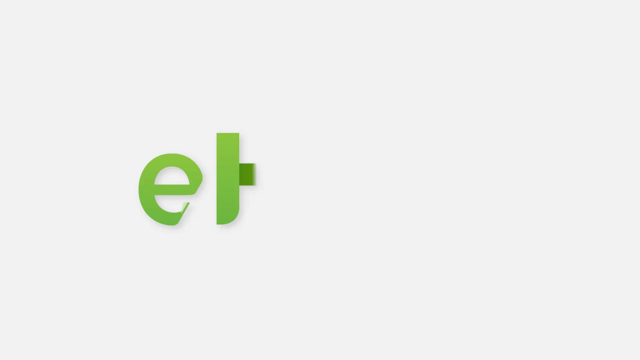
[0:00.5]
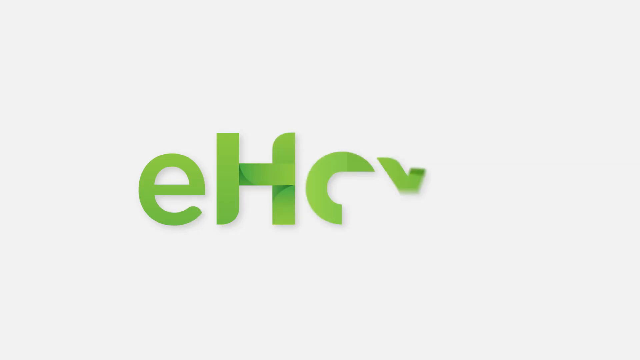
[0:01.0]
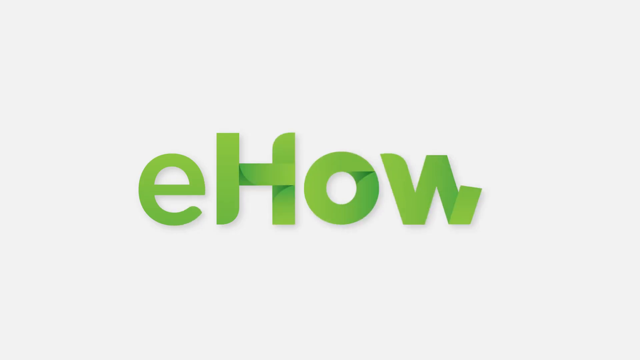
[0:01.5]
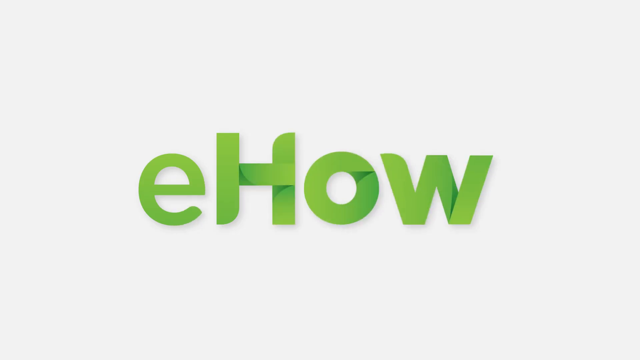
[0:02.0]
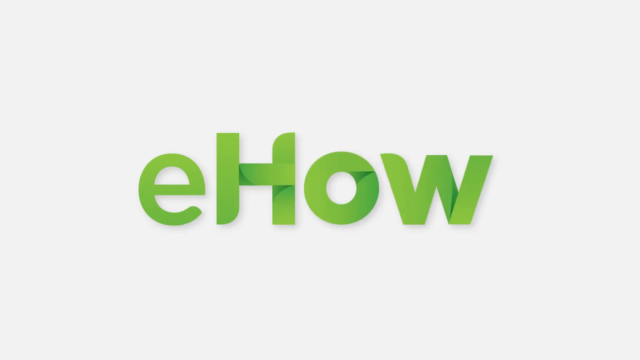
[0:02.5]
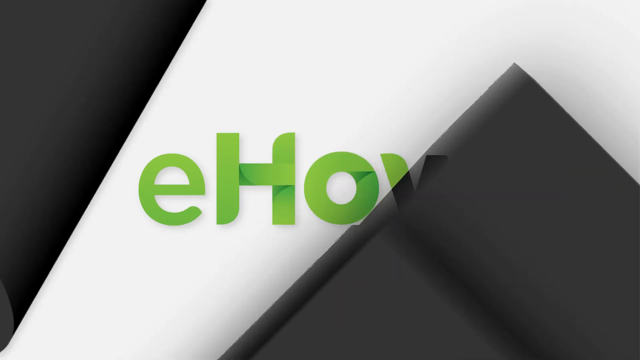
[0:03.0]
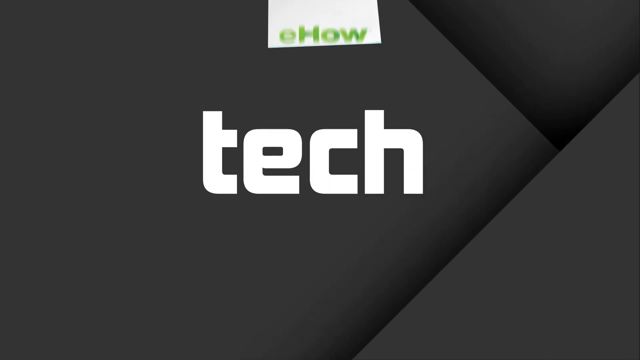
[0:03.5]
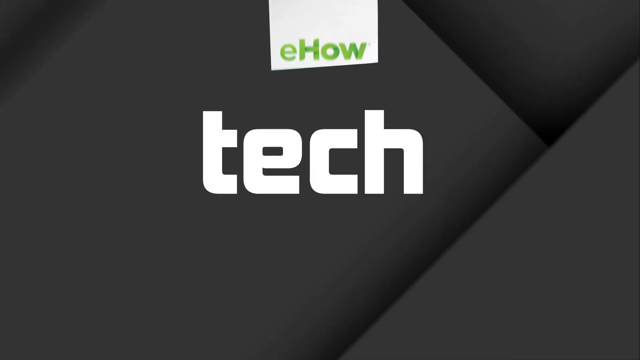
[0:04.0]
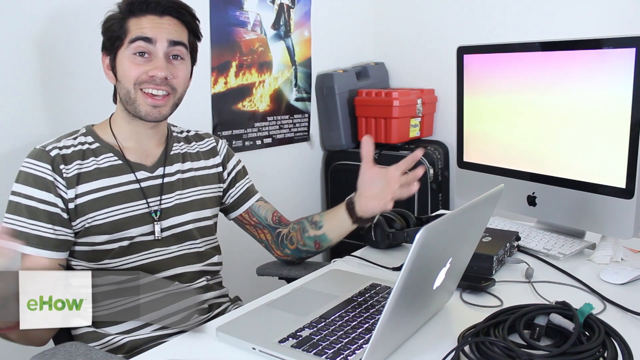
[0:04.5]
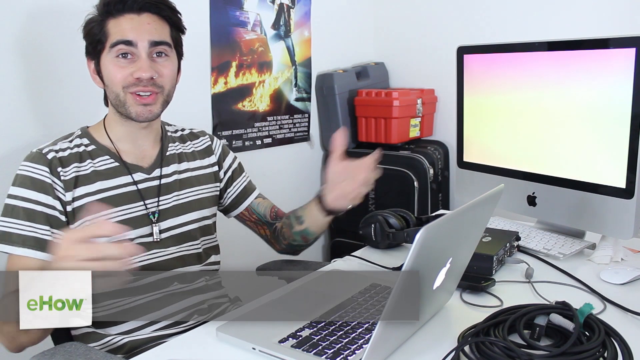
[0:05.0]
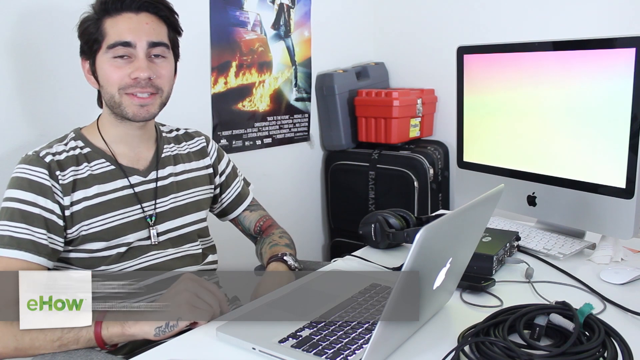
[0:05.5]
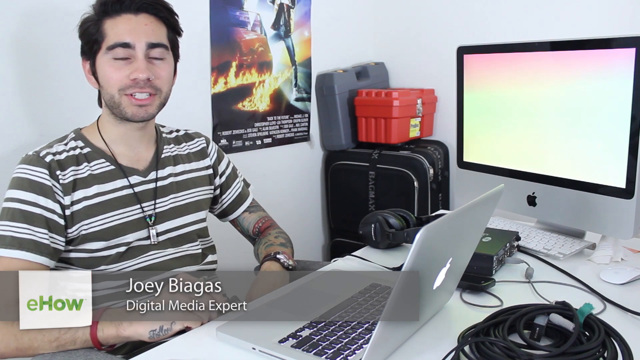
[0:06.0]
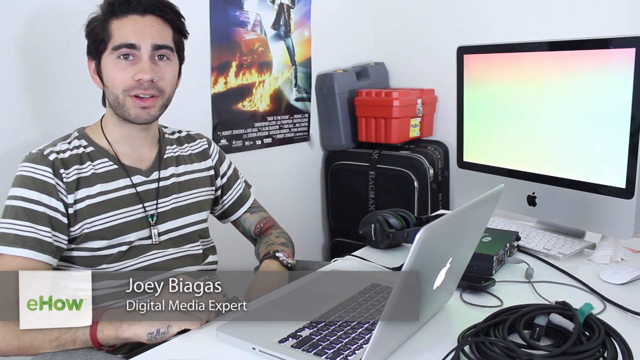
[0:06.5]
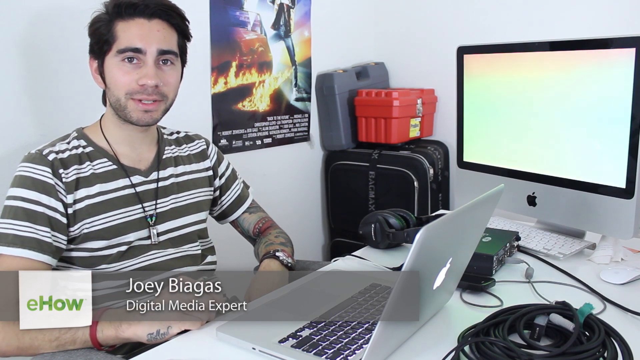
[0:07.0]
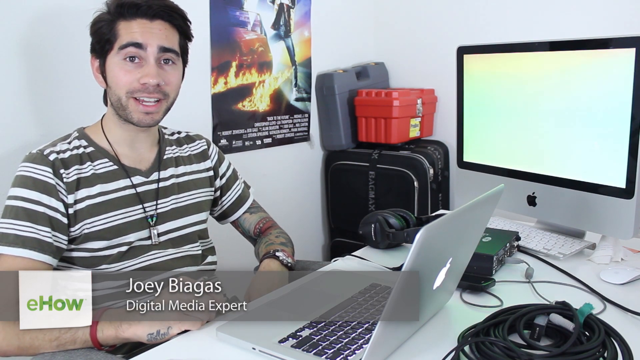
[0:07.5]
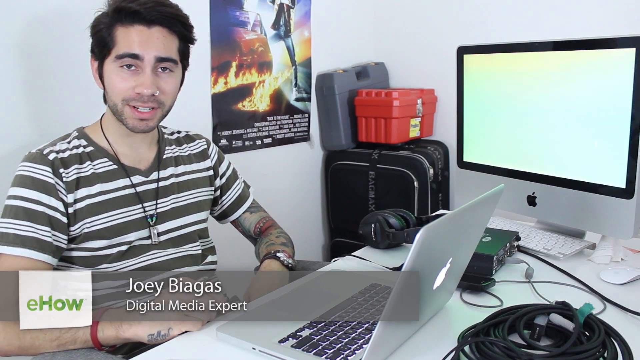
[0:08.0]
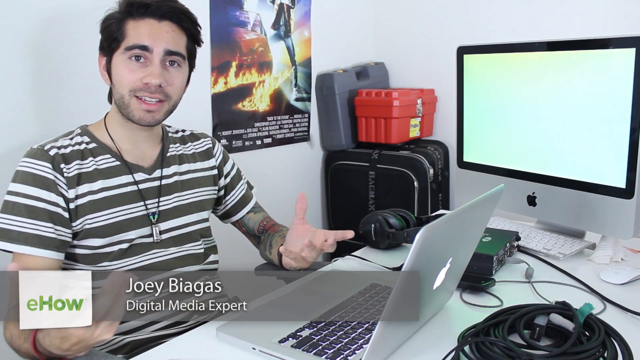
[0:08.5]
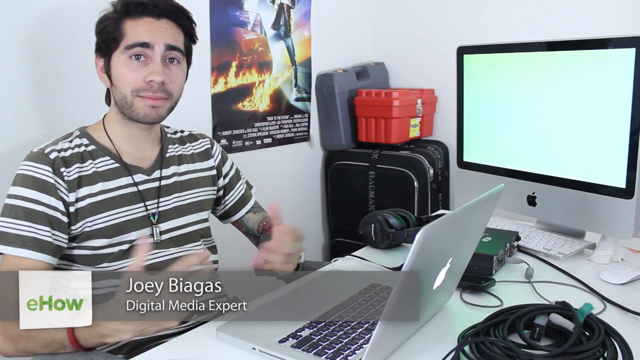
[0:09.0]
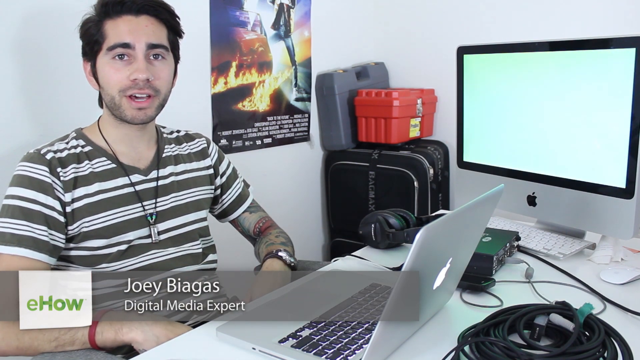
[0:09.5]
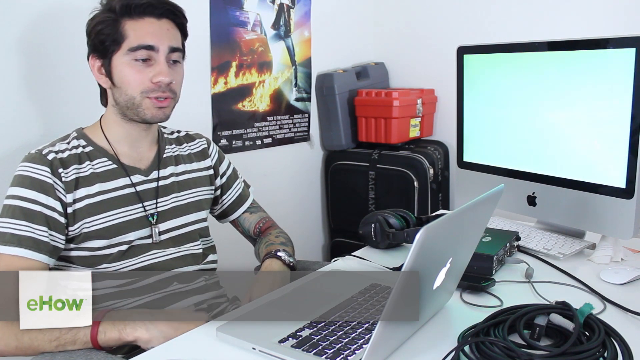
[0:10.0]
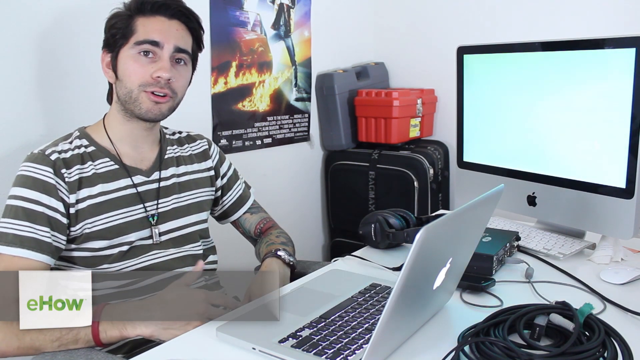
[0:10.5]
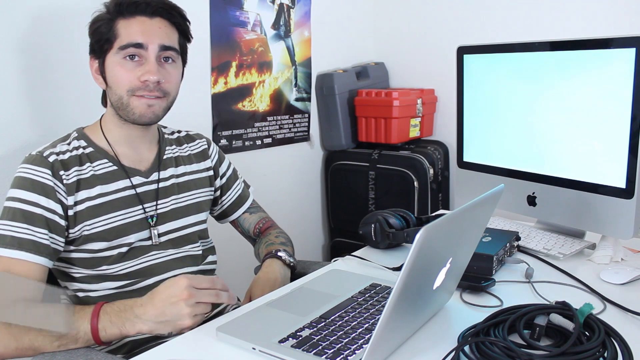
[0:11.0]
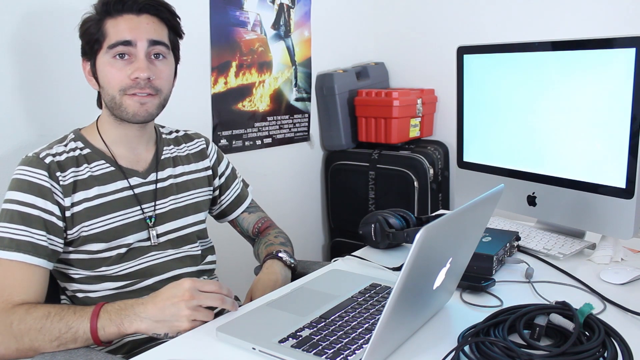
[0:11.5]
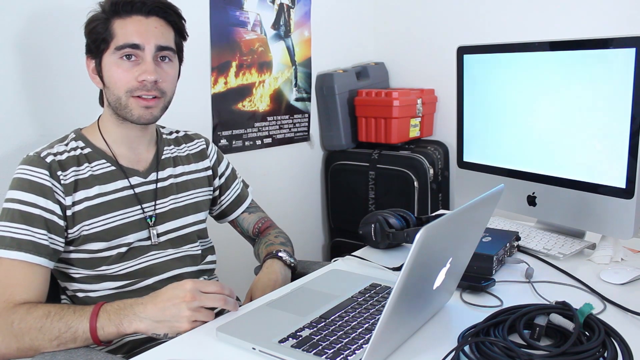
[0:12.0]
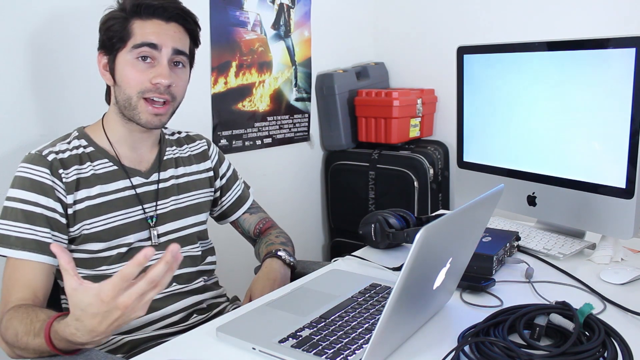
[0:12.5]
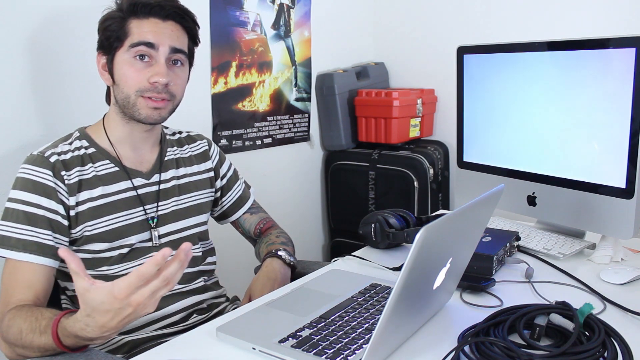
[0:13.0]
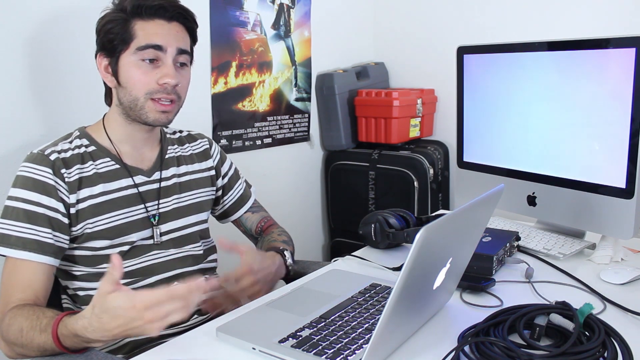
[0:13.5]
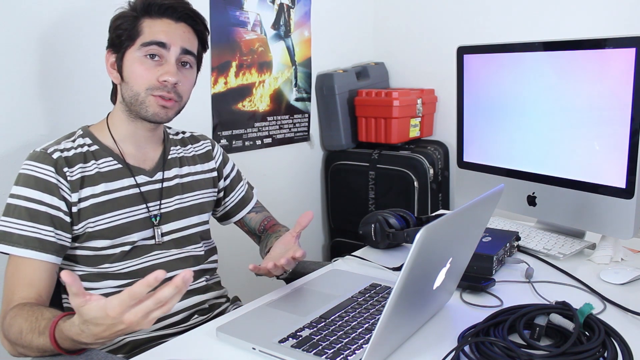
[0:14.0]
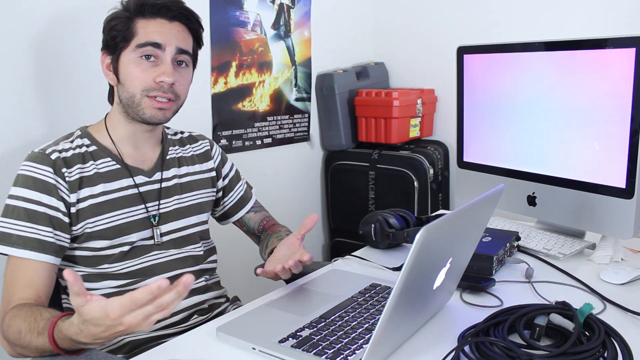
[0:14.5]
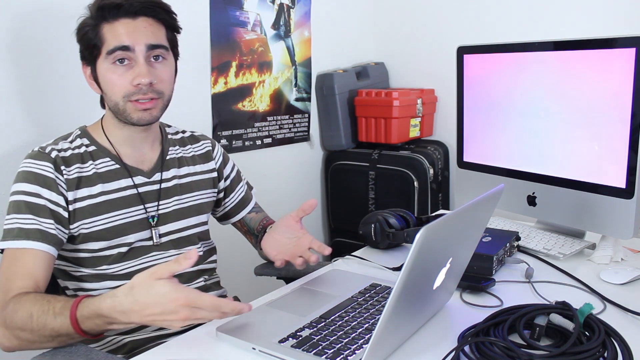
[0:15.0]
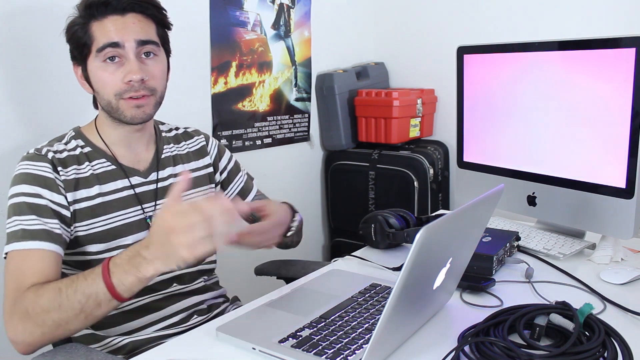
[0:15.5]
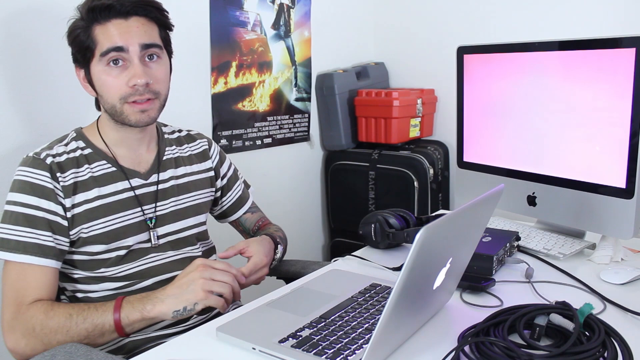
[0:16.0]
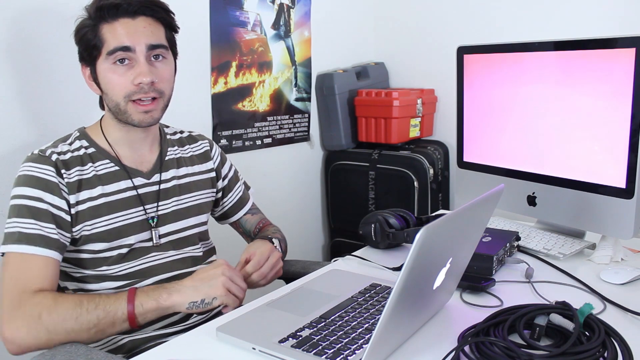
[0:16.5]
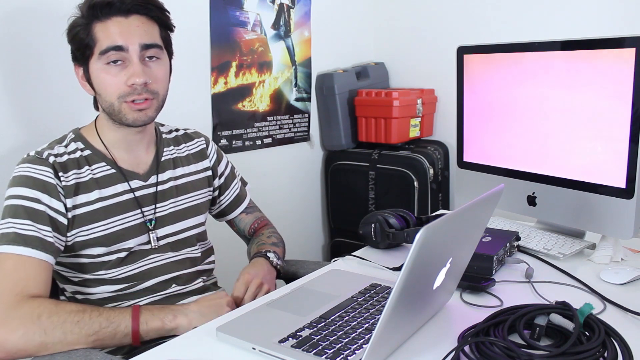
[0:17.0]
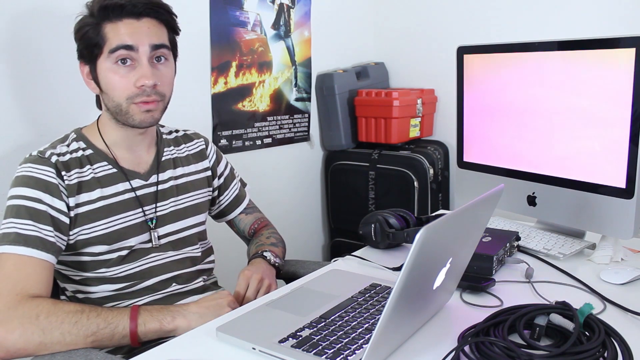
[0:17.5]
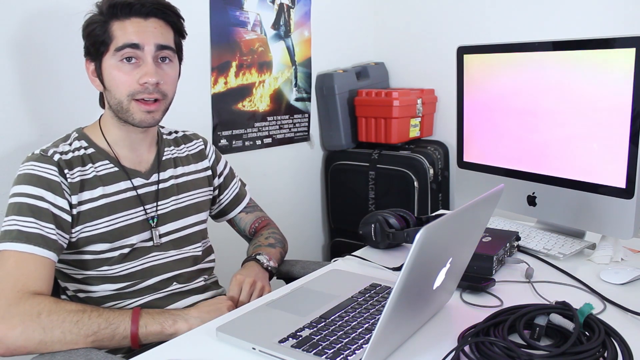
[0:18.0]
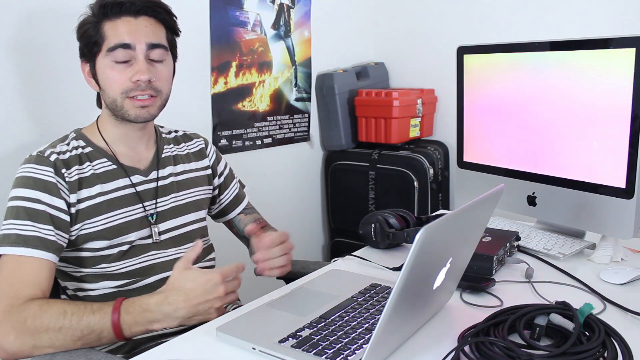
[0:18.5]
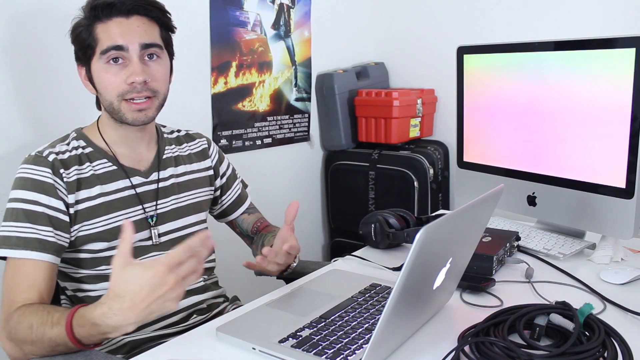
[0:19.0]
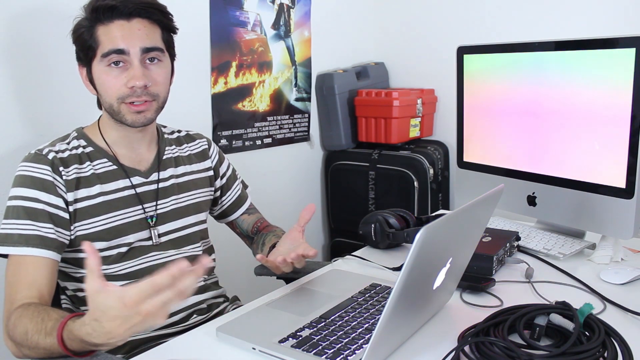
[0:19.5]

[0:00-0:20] The video displays the text "eHow Tech." A Caucasian man has one Mac laptop and one Mac desktop available to him in his office space. In the introduction, a green chyron with white text at the very bottom of the screen gives his name as Joey Biagas.